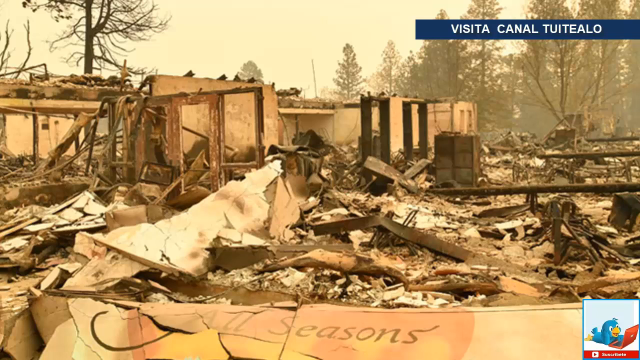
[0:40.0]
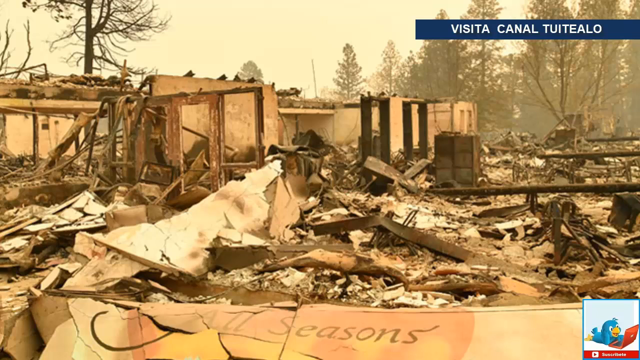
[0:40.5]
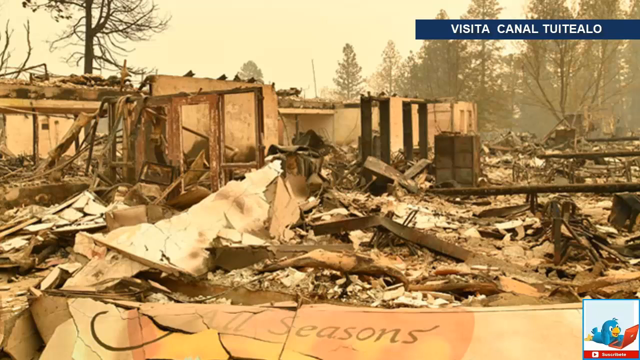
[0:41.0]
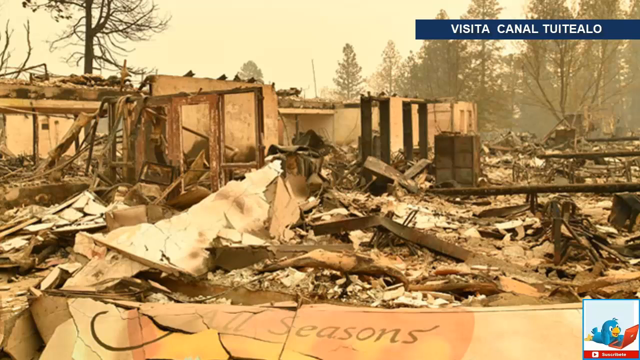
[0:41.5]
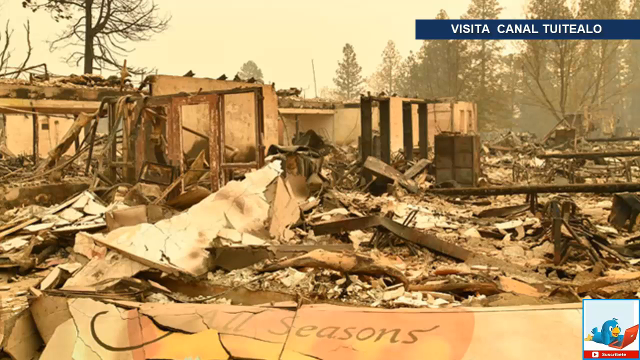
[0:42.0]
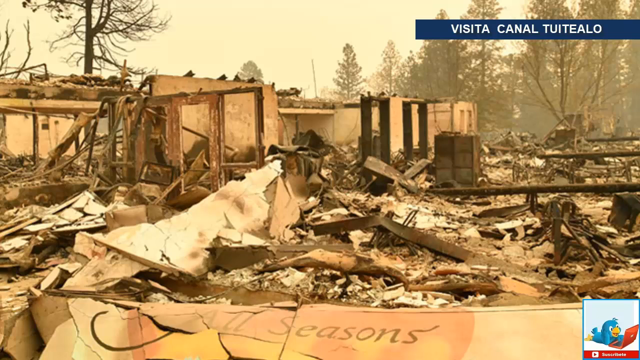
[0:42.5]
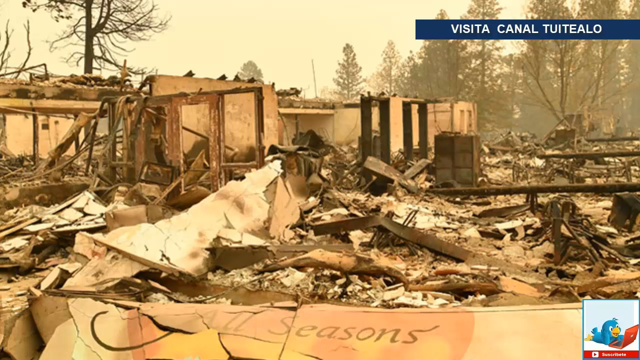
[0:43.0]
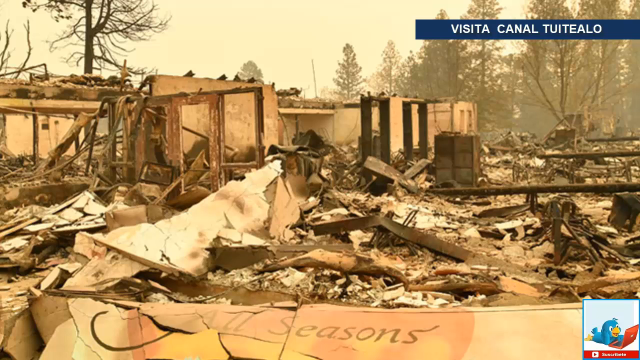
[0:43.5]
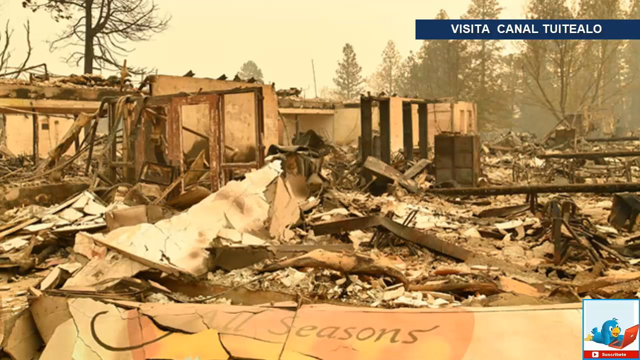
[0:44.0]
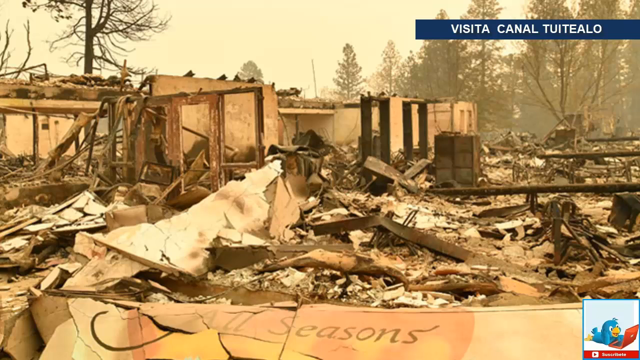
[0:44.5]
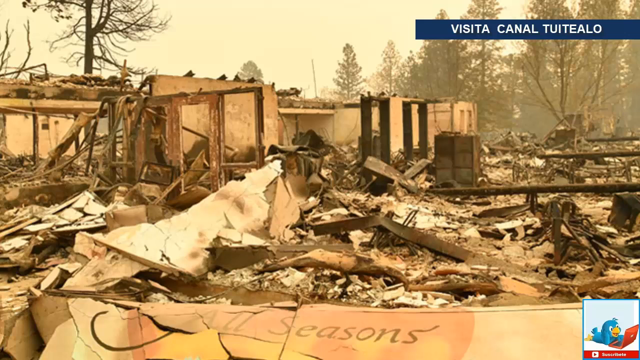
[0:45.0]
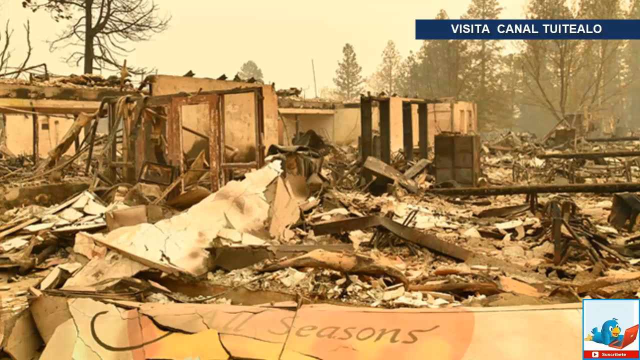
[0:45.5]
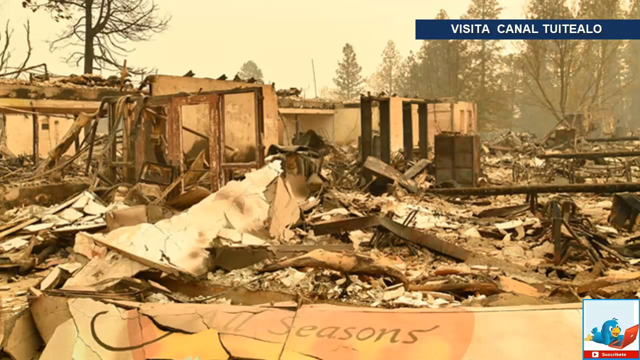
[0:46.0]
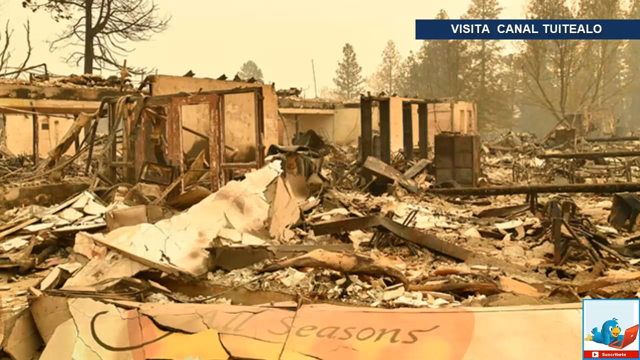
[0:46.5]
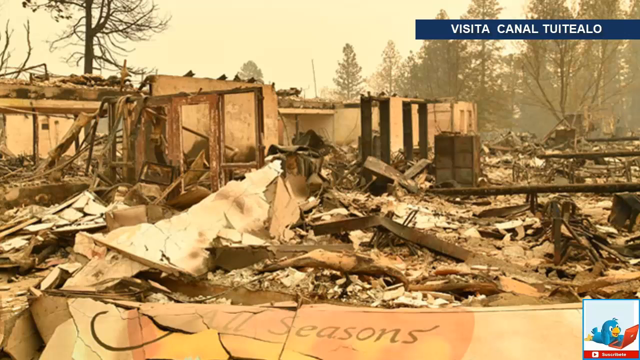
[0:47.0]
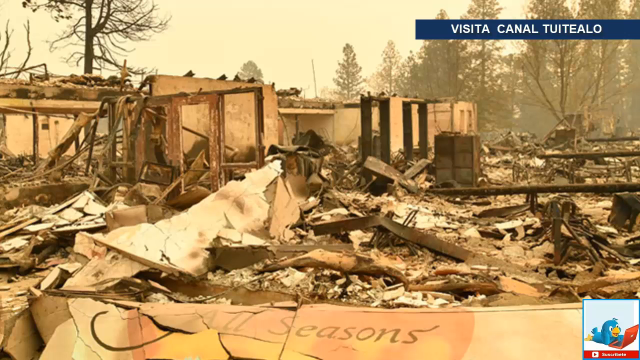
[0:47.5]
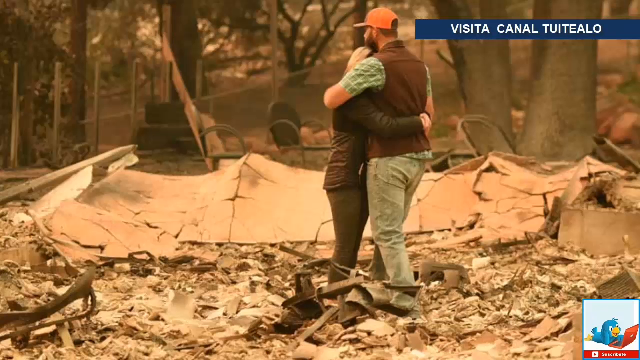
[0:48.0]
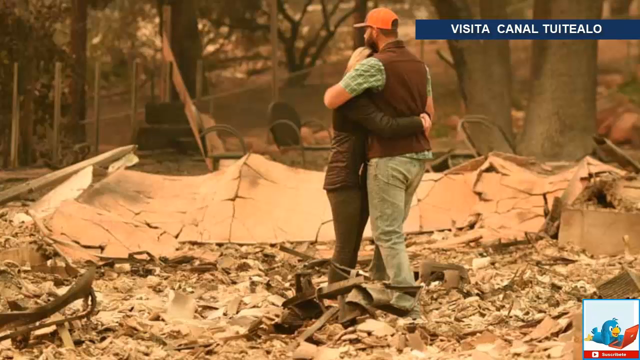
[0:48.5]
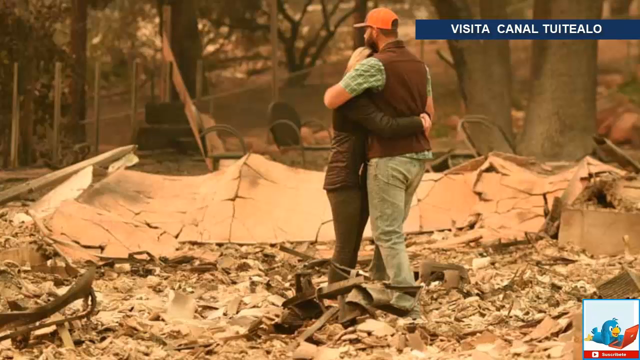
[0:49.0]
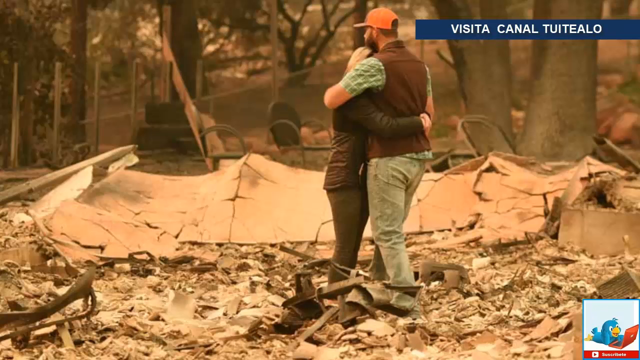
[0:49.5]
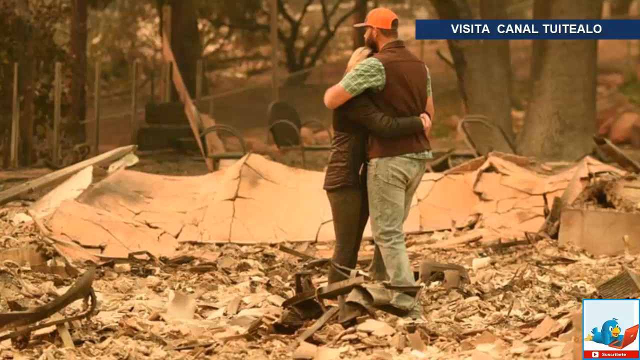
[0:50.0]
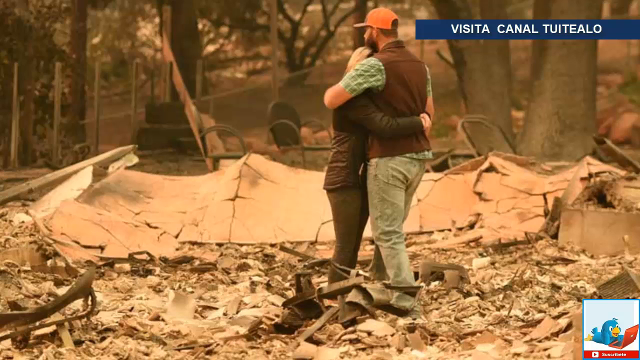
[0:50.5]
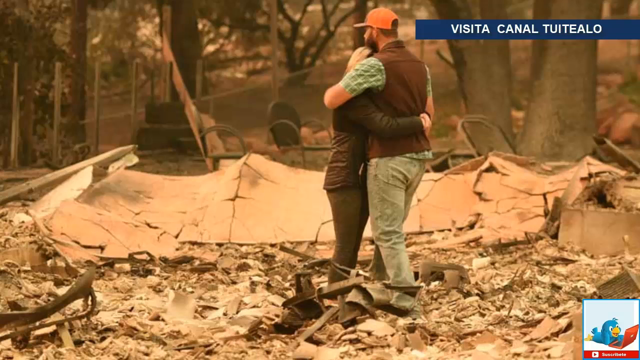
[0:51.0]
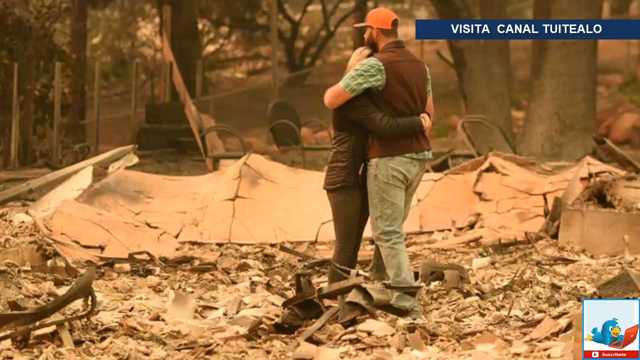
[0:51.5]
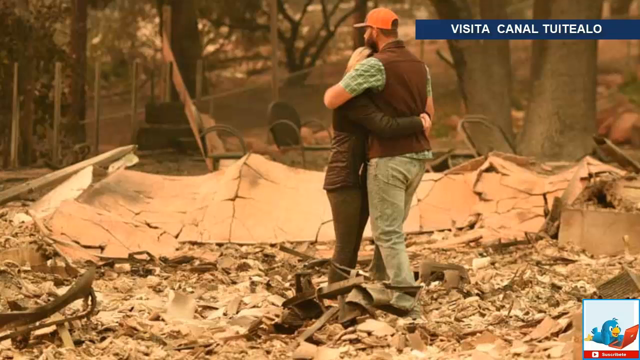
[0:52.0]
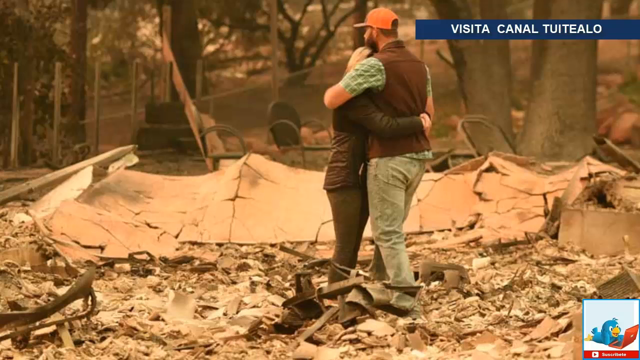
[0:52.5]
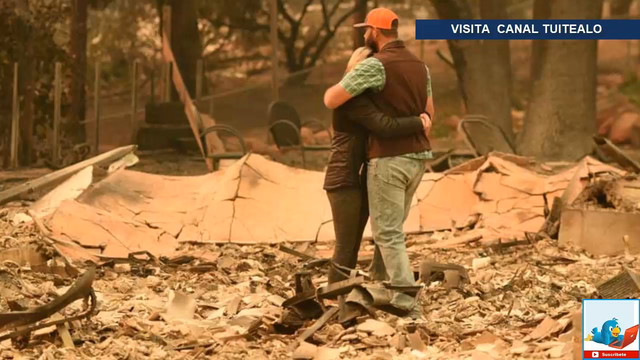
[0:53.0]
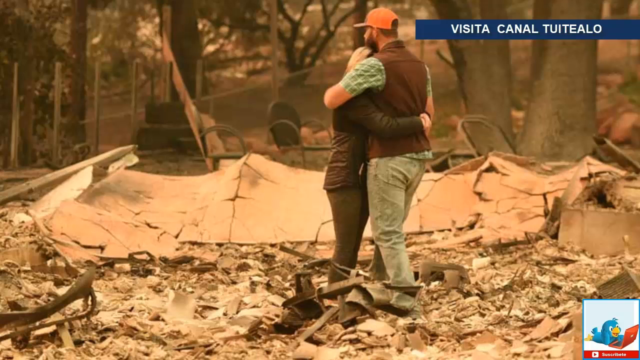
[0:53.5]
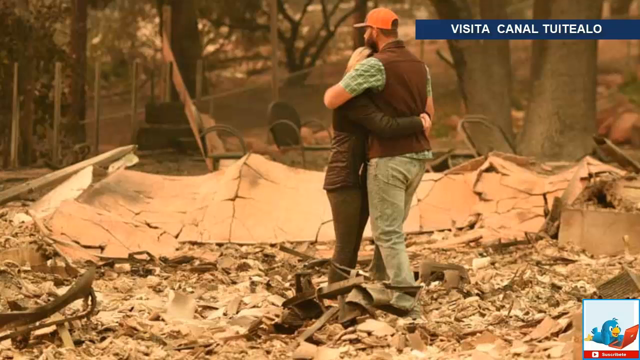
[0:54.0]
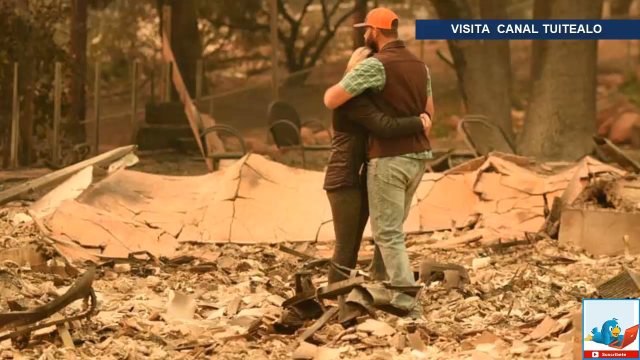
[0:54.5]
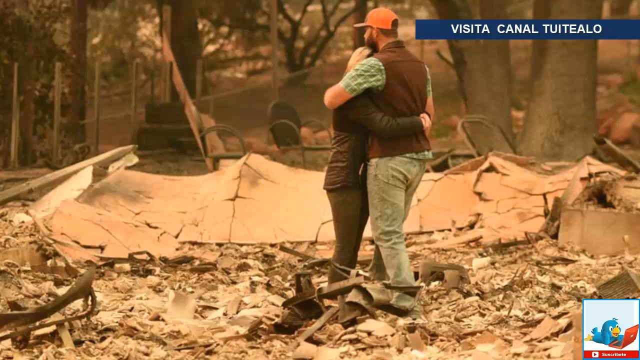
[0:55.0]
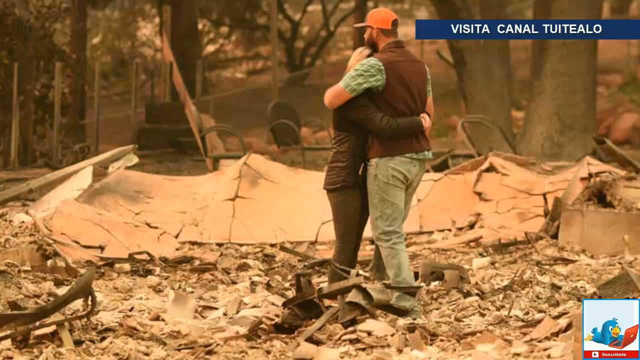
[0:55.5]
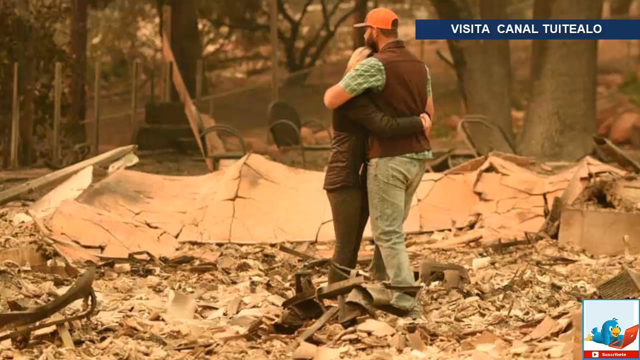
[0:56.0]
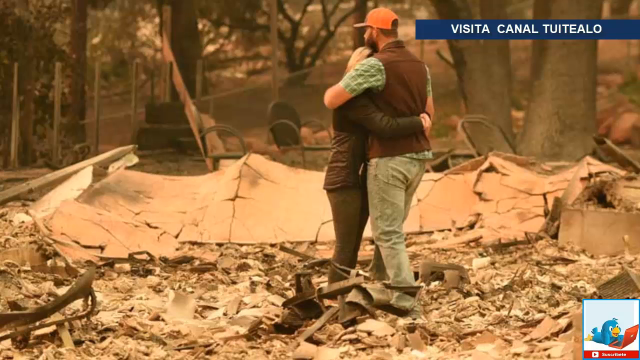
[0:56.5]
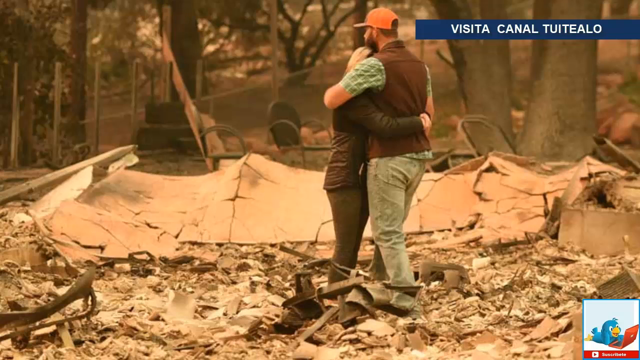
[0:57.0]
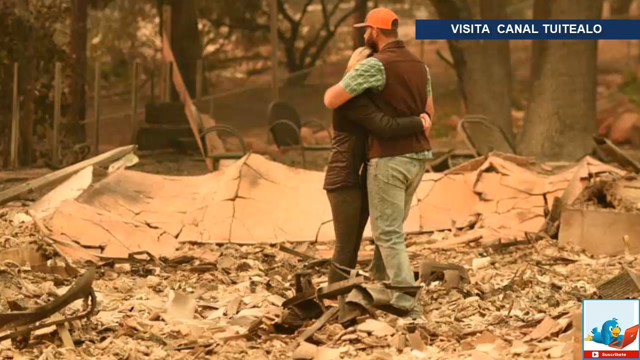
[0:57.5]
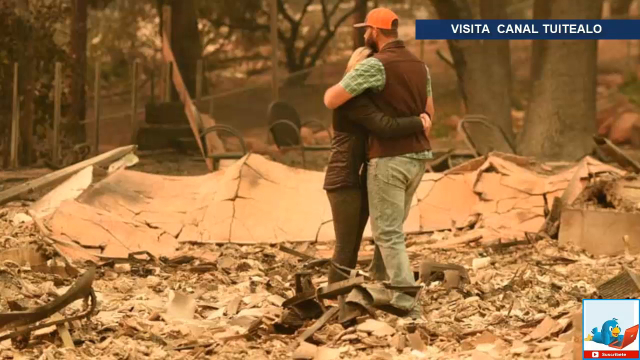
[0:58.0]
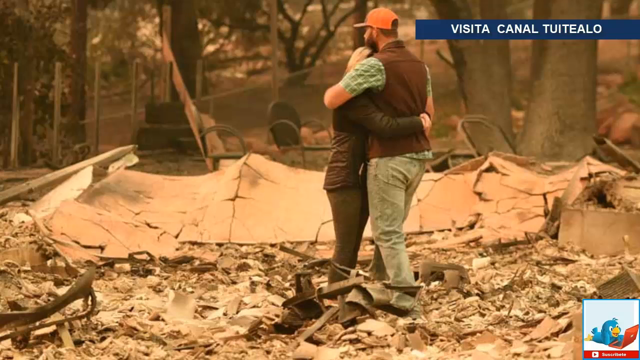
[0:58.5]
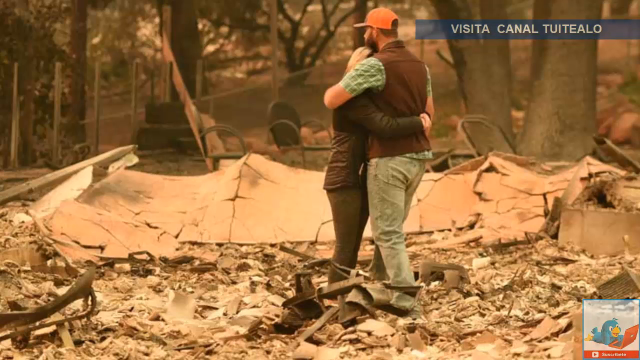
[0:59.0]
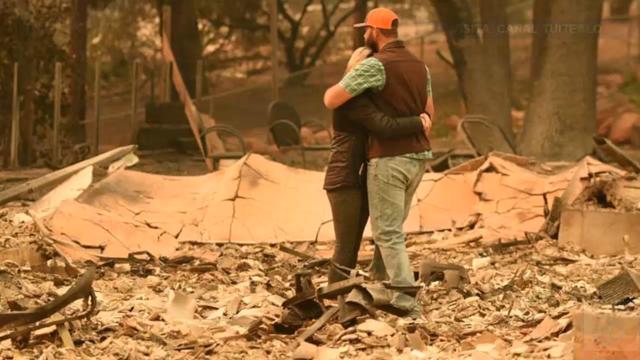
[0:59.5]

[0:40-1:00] An old abandoned building without a roof appears; it looks like it was either vandalized or lost its material over time. The place looks scary. Old carpets and old furniture lie outside. The building is in the forest. Two people, a female and a male, hug each other, seemingly to comfort each other. The place looks like it may have recently been burnt down. Police are inspecting the site.